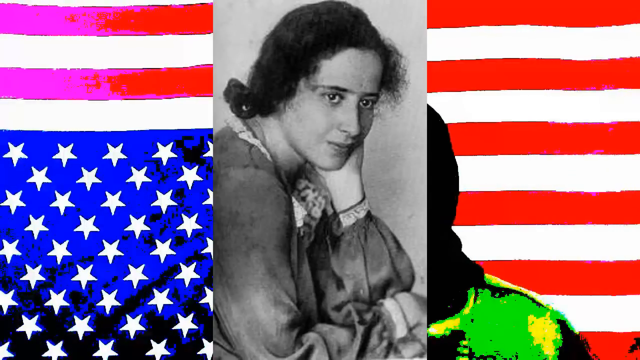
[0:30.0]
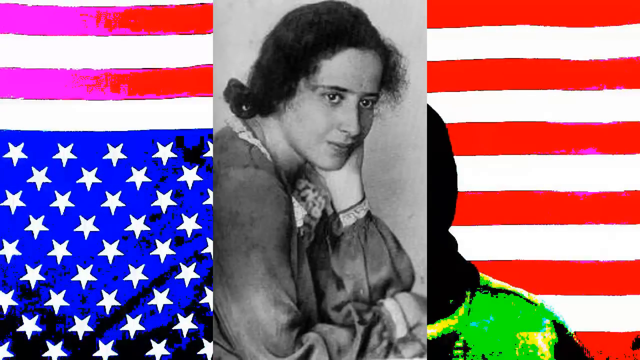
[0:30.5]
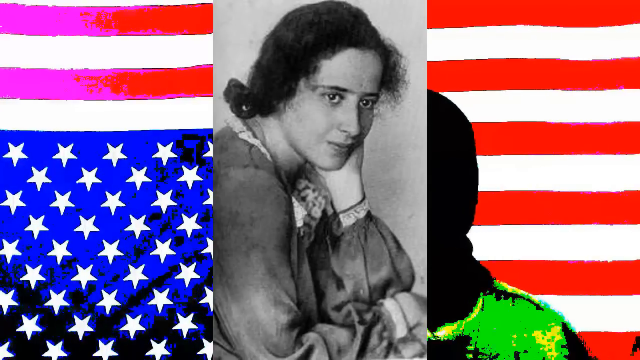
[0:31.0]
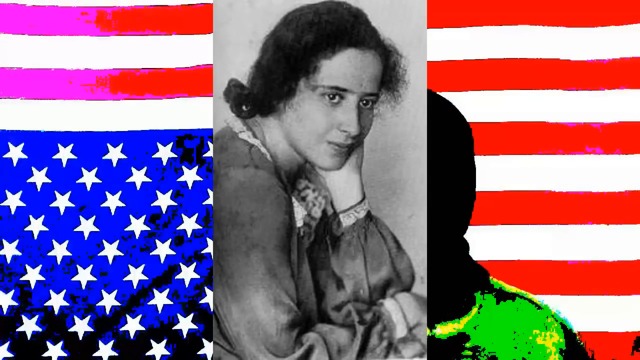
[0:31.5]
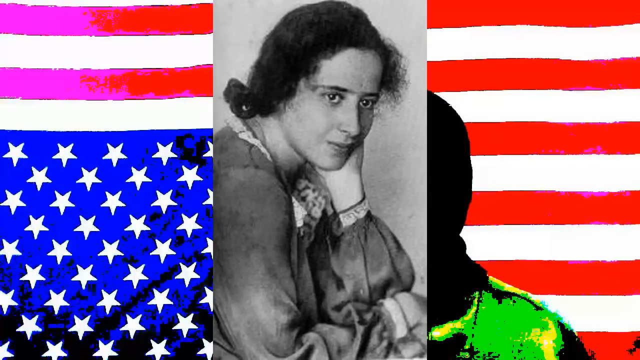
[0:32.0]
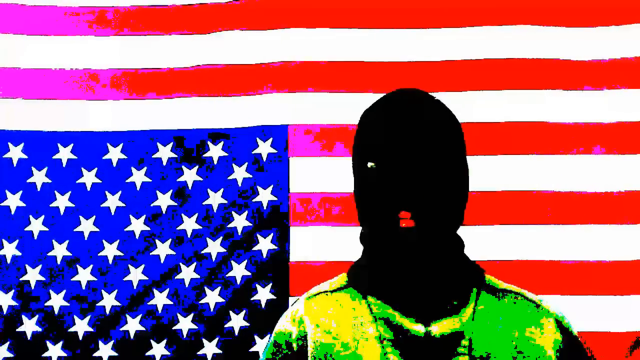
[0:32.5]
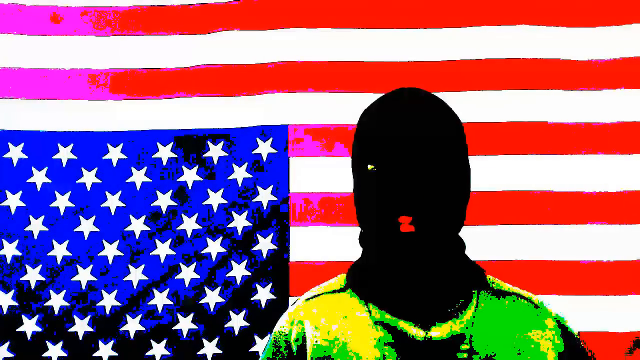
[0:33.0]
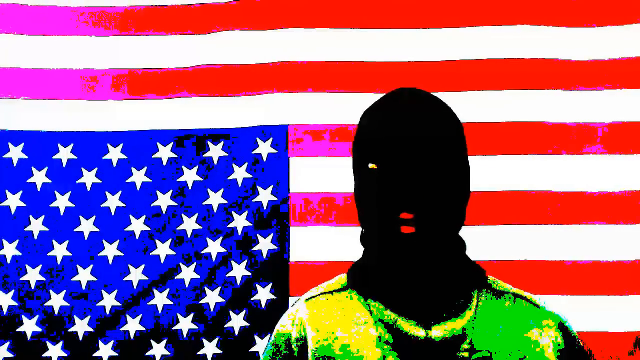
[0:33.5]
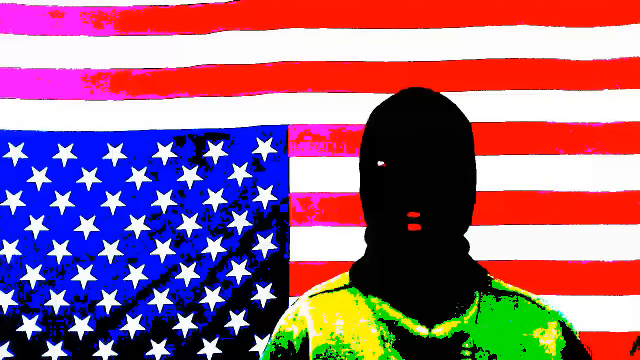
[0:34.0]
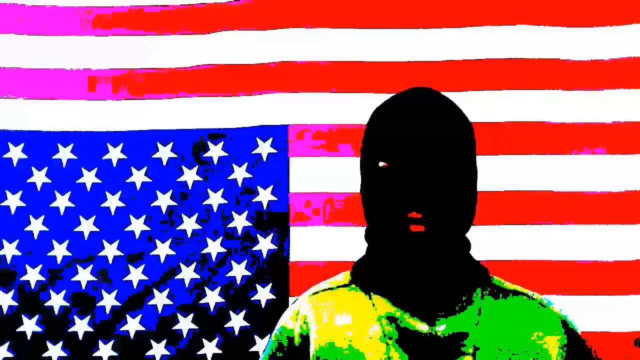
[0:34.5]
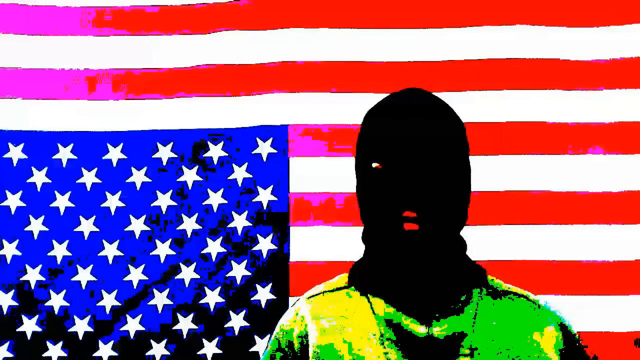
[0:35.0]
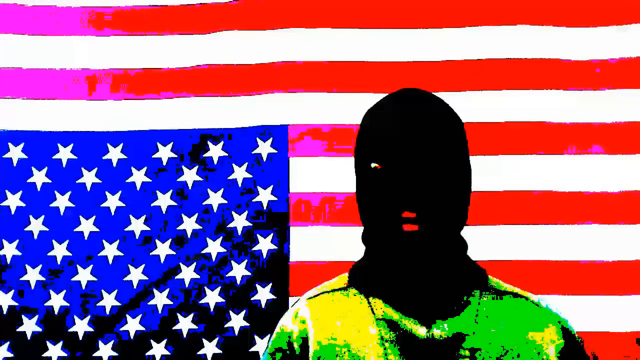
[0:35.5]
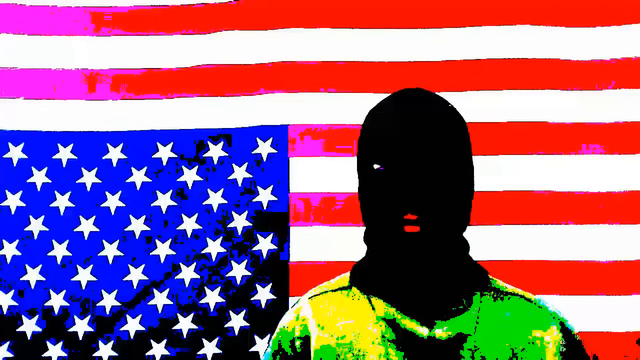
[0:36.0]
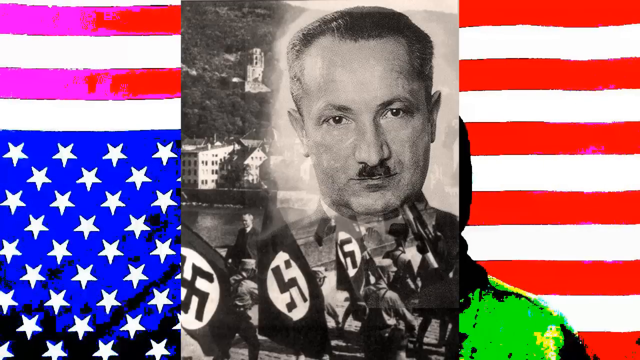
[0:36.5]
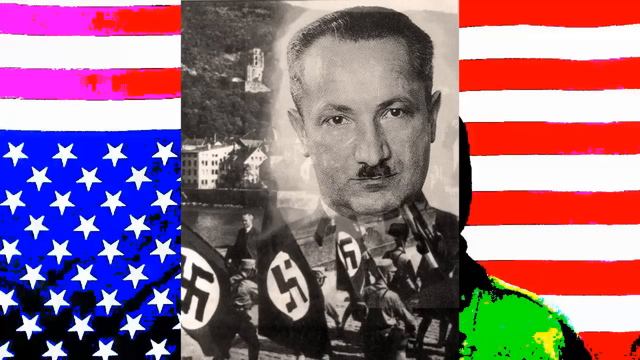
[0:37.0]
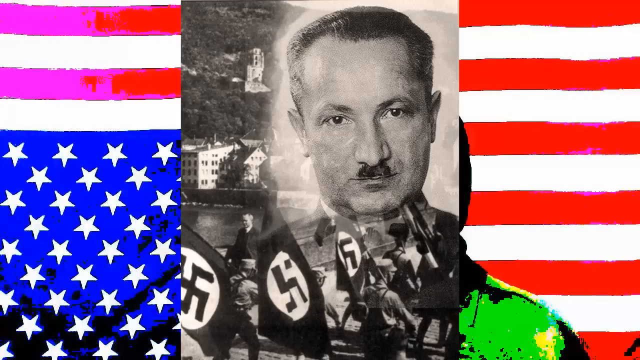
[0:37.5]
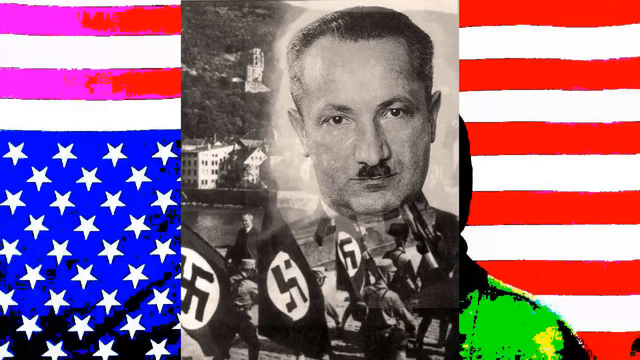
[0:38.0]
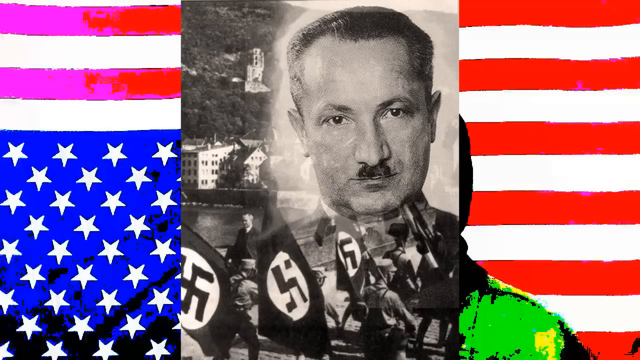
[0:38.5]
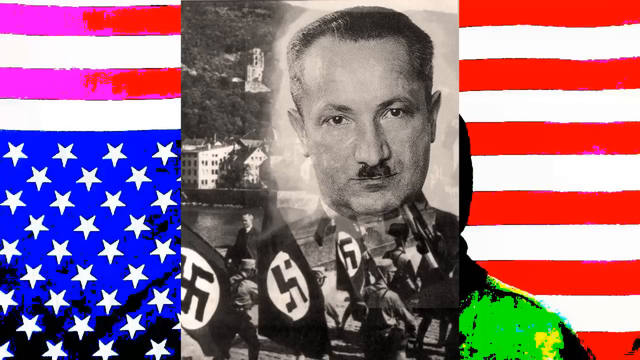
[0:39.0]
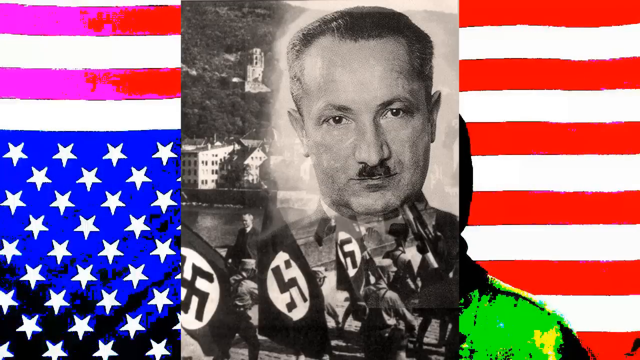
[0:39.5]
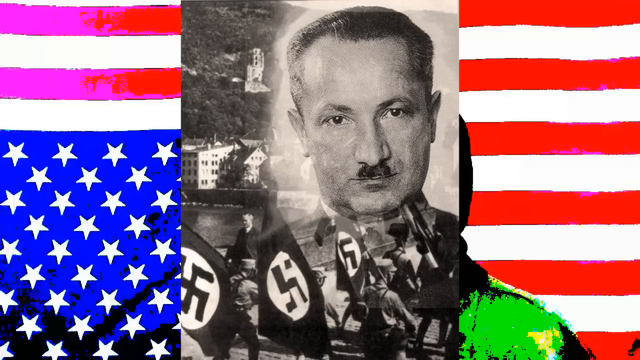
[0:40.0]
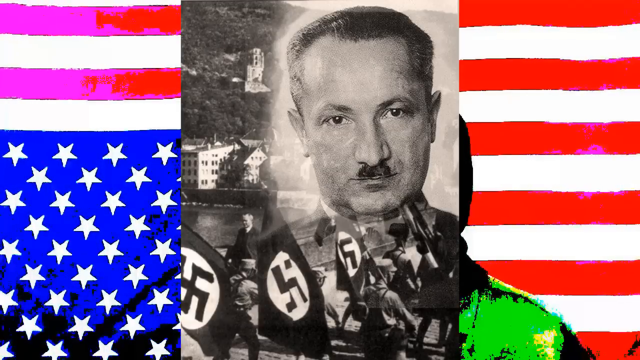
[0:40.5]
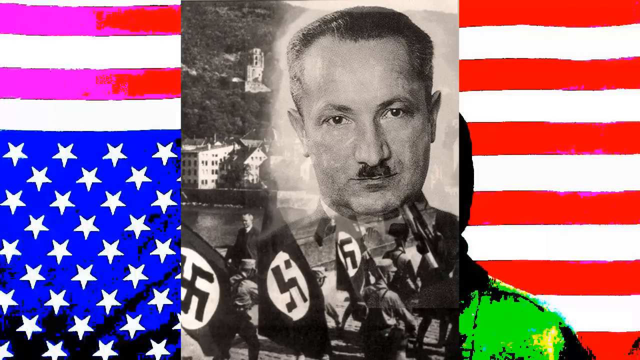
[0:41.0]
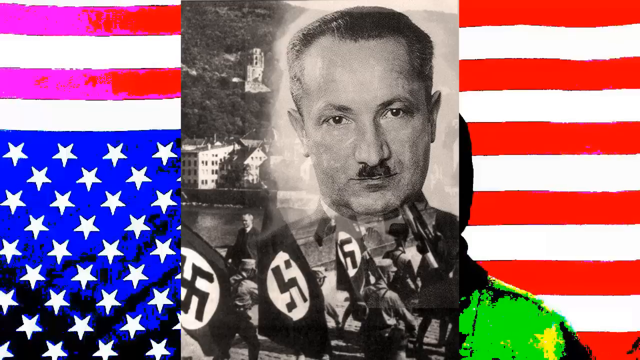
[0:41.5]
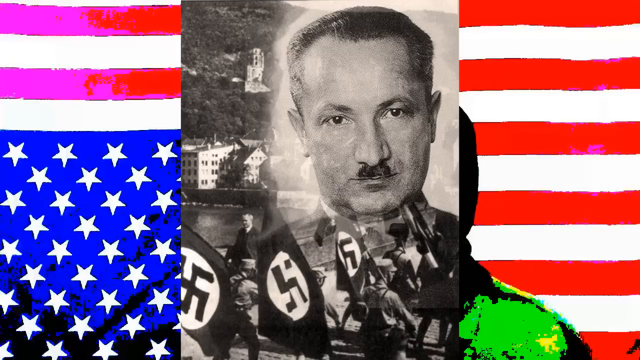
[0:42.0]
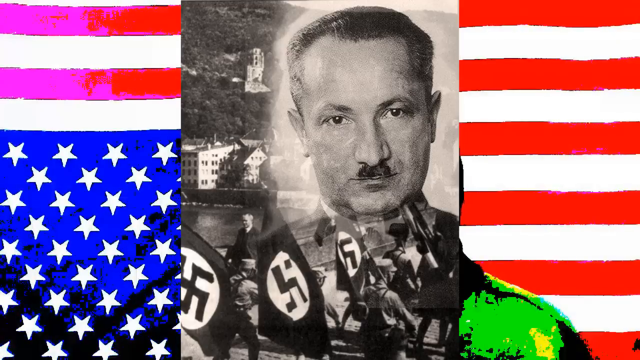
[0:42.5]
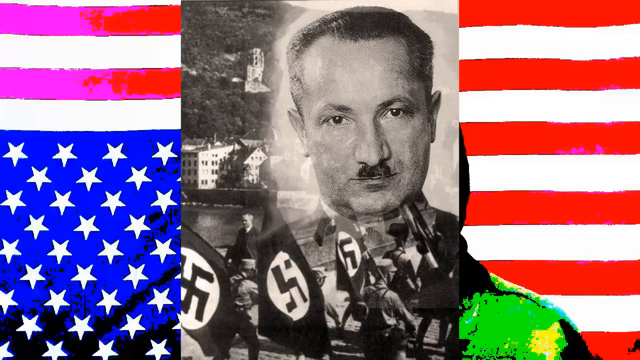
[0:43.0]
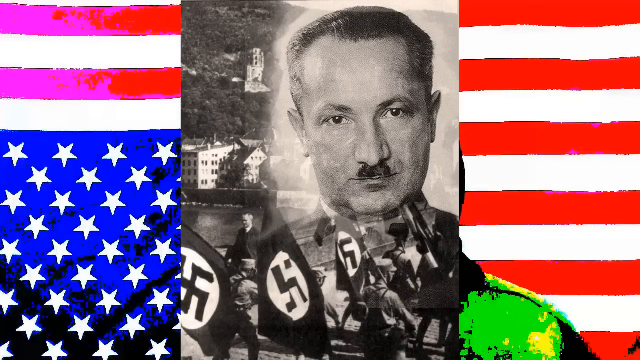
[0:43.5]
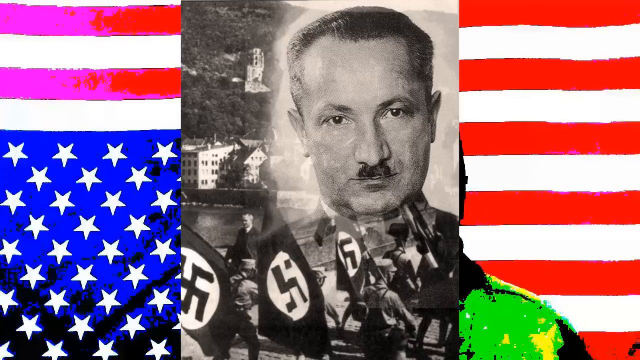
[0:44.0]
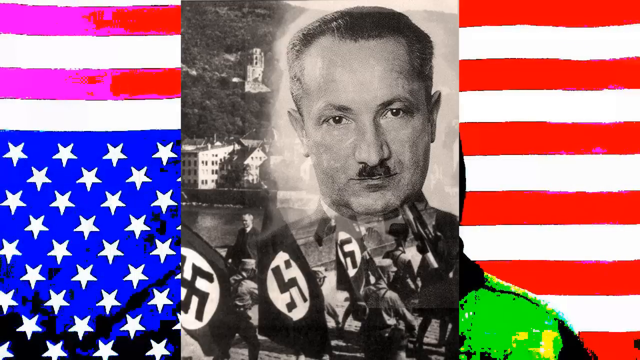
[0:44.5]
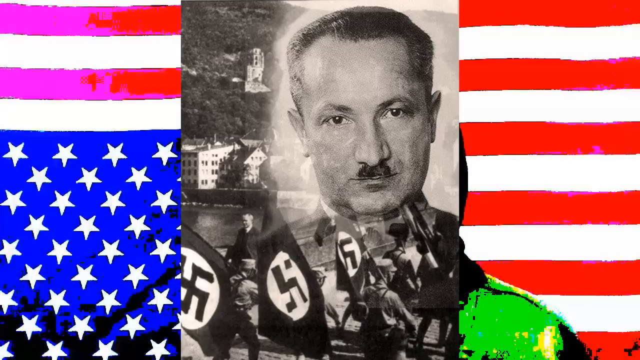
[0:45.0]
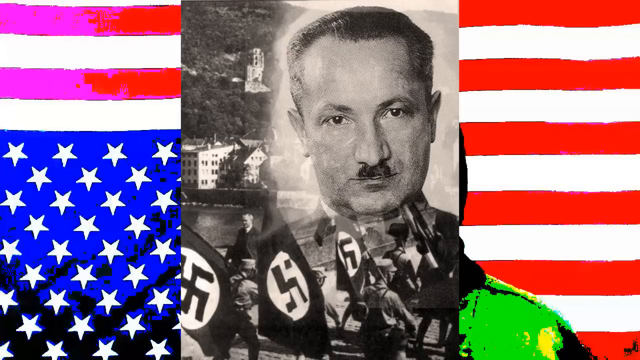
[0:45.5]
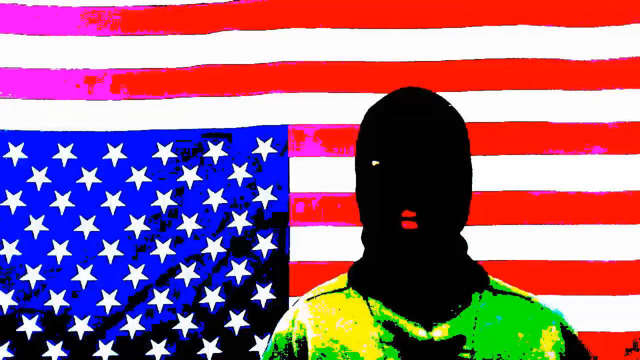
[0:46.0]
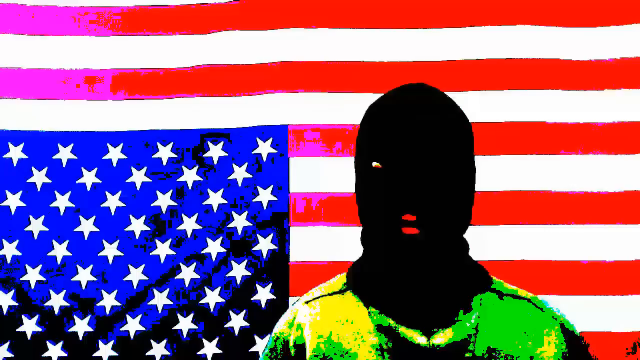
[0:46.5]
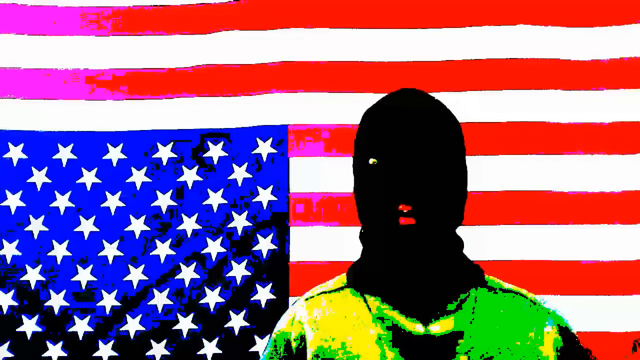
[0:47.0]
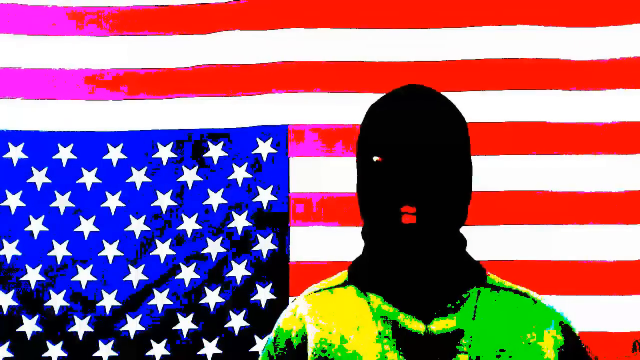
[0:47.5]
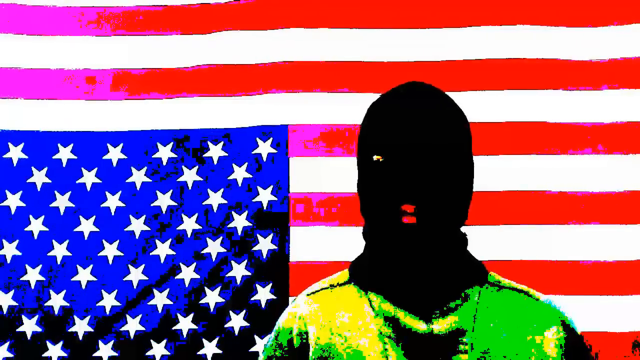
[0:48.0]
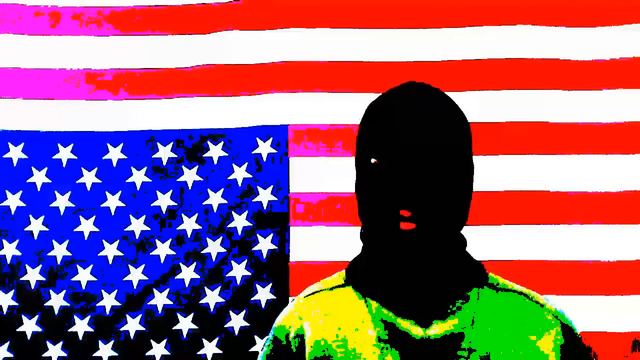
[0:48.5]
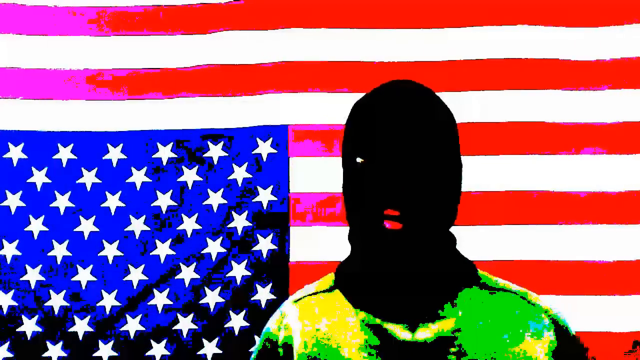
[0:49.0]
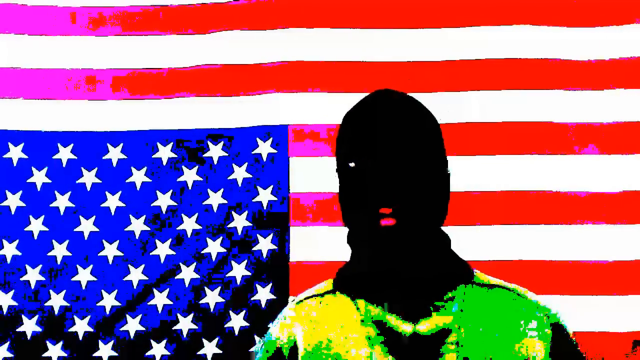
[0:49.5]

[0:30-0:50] The same sequence appears to play once again: it starts with a black-and-white photo of a woman with dark hair posing for the photo, then cuts to a man with a Hitler mustache with Nazi flags in the background, followed by buildings and a body of water. In between the photographs is the man in the black ski mask, with only his eyes and mouth visible; he wears a neon green shirt. In the background, the American flag on the left side of the photos switches colors, the red stripes going from pink to red to pink and the blue behind the stars from blue to black to blue. The woman in the image wears a kind of baggy shirt or dress with adornment on the wrists and collar.